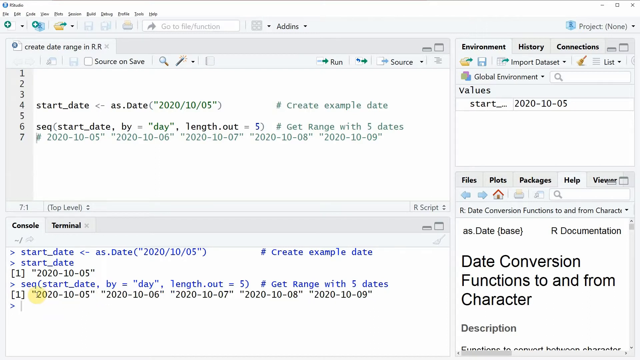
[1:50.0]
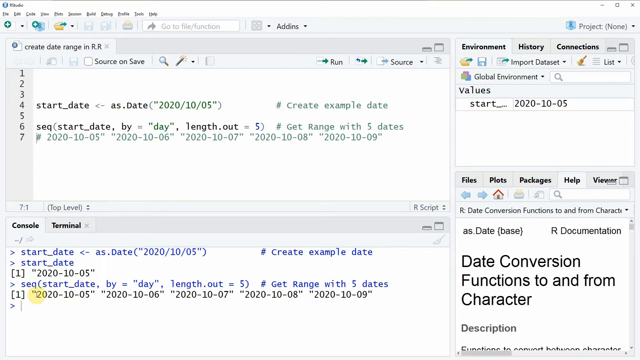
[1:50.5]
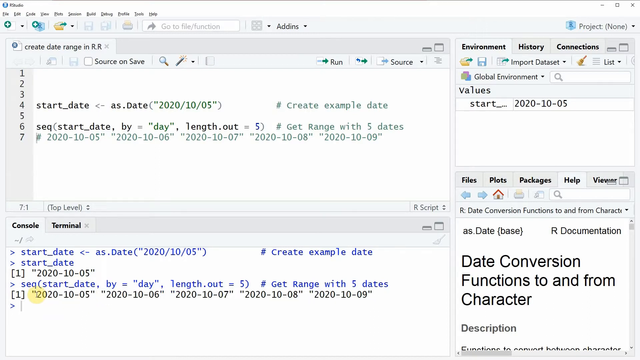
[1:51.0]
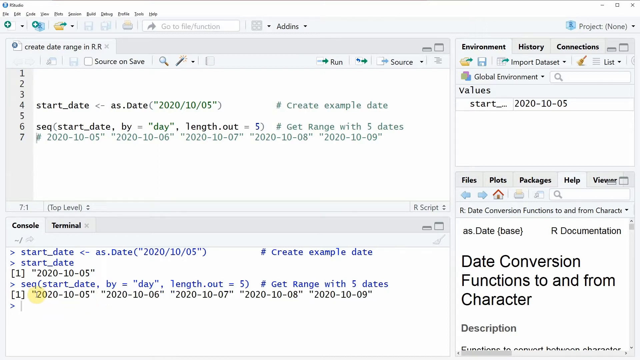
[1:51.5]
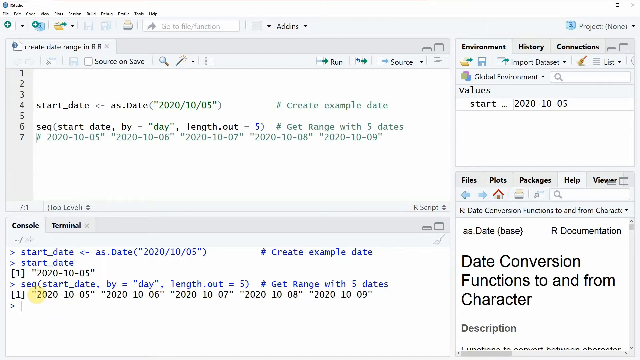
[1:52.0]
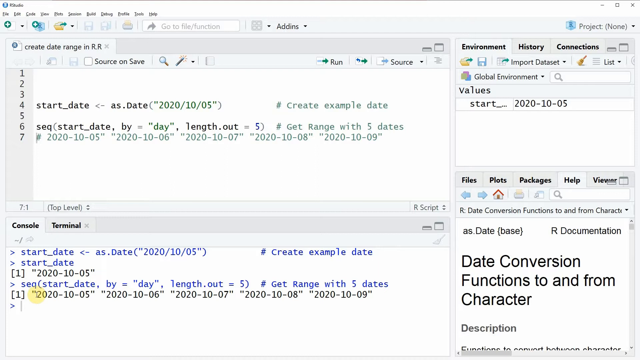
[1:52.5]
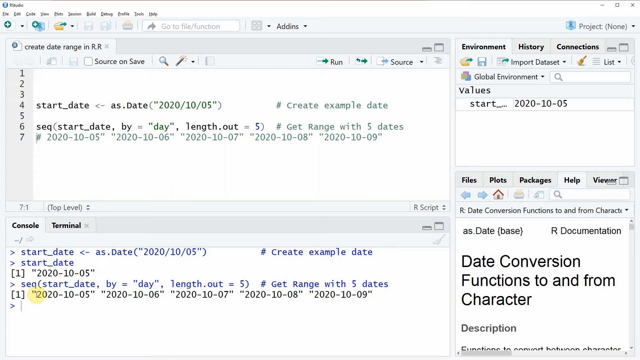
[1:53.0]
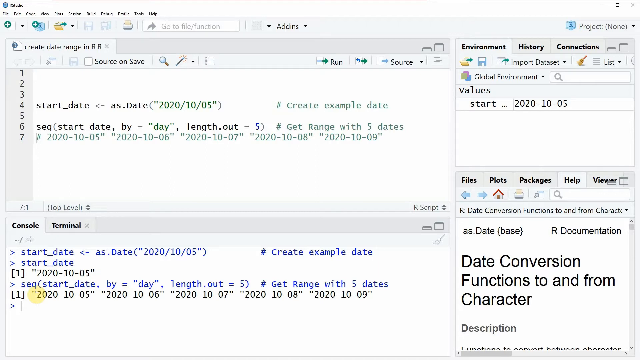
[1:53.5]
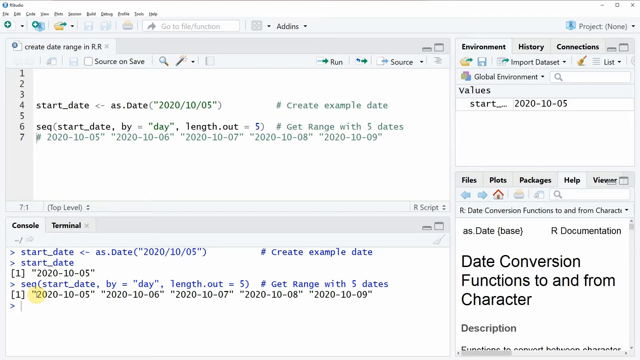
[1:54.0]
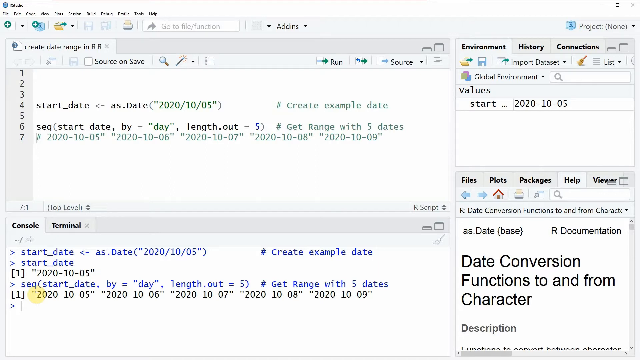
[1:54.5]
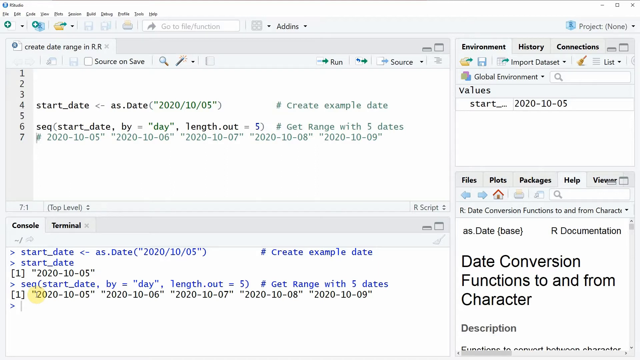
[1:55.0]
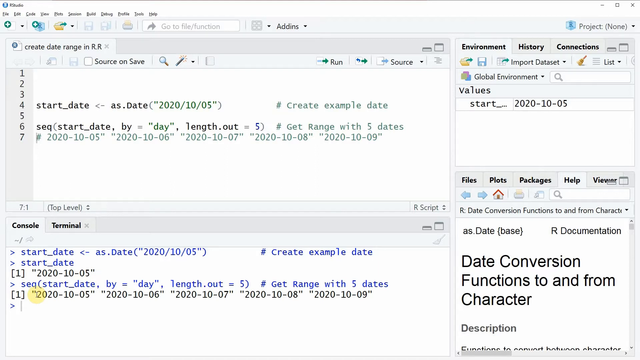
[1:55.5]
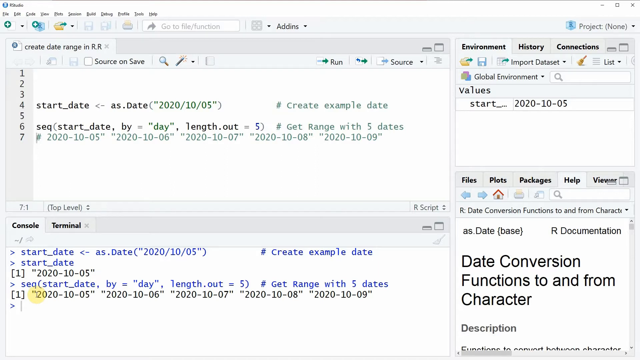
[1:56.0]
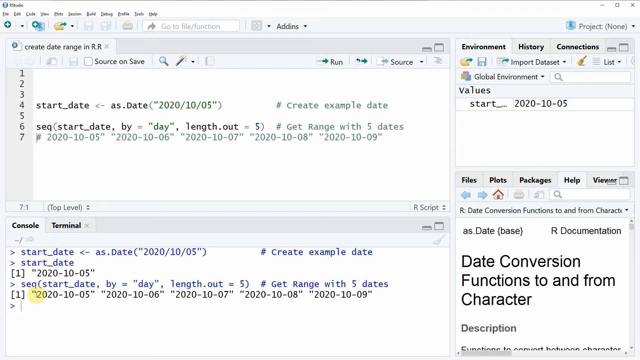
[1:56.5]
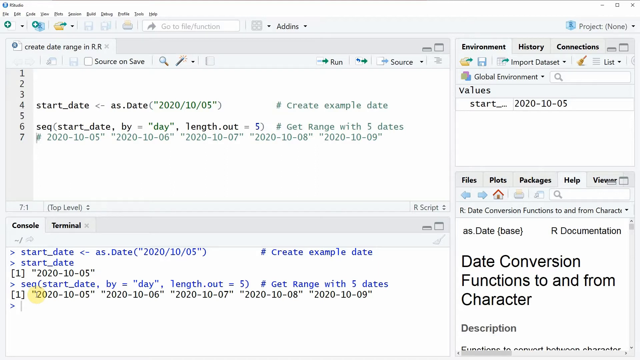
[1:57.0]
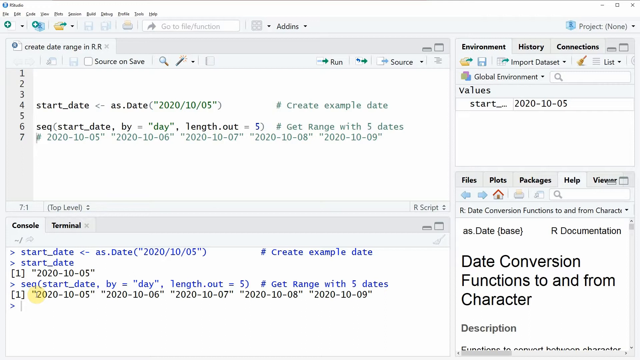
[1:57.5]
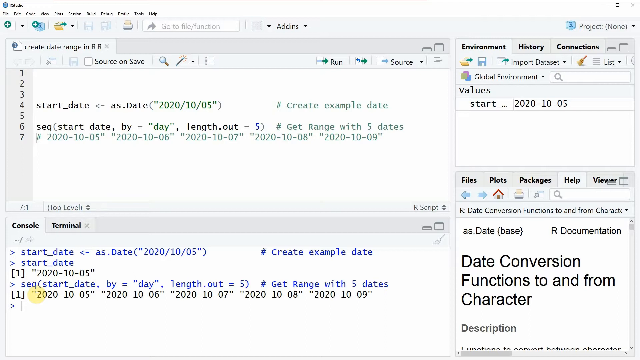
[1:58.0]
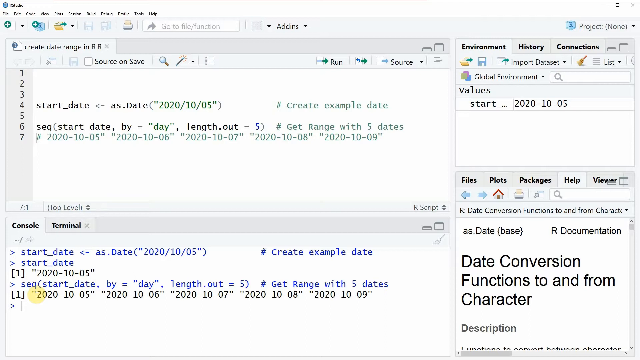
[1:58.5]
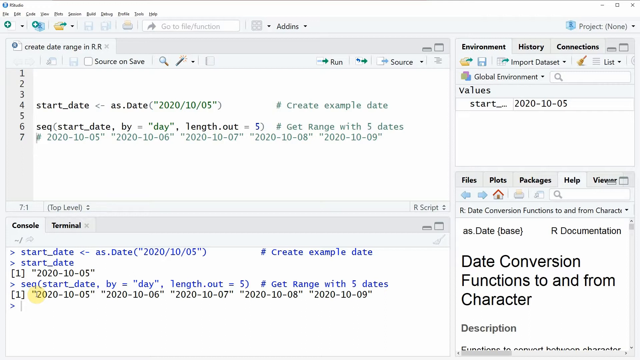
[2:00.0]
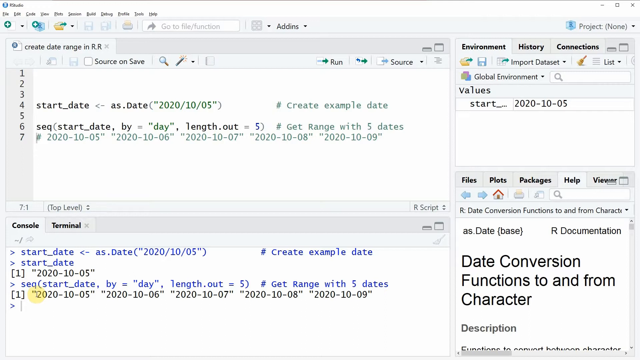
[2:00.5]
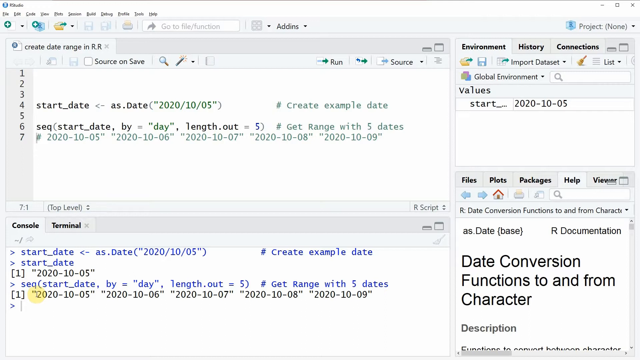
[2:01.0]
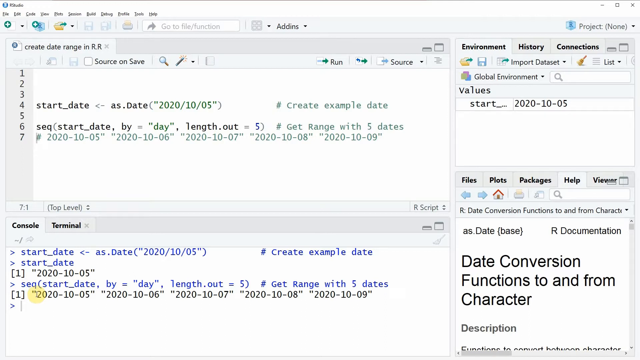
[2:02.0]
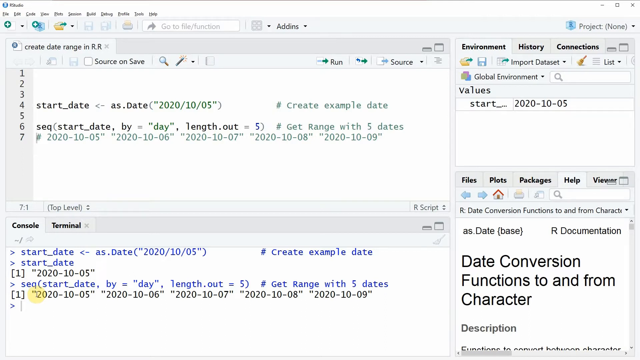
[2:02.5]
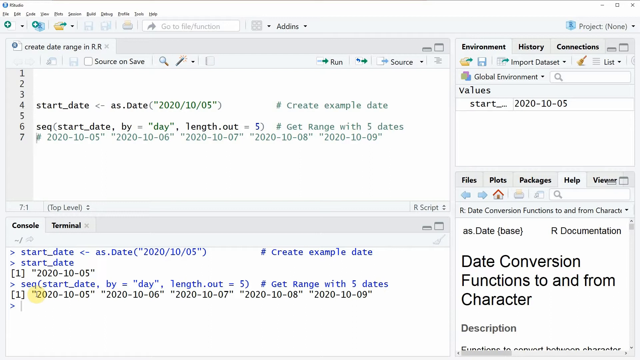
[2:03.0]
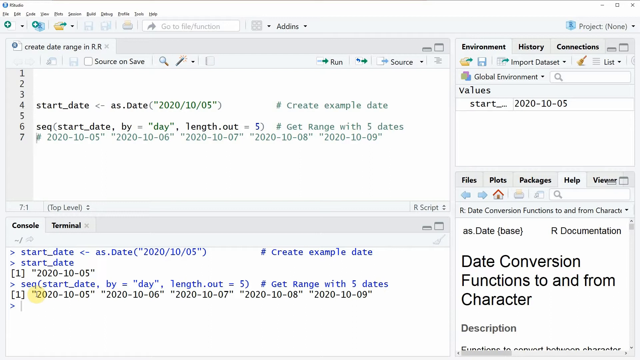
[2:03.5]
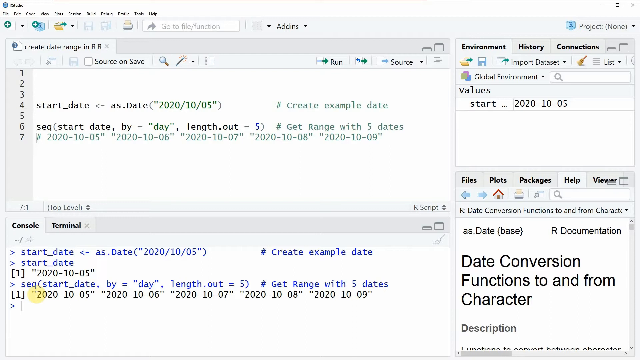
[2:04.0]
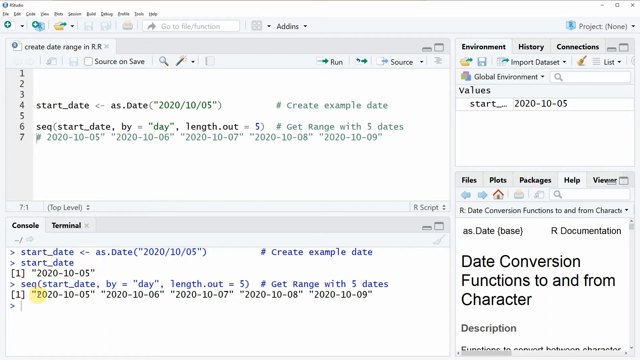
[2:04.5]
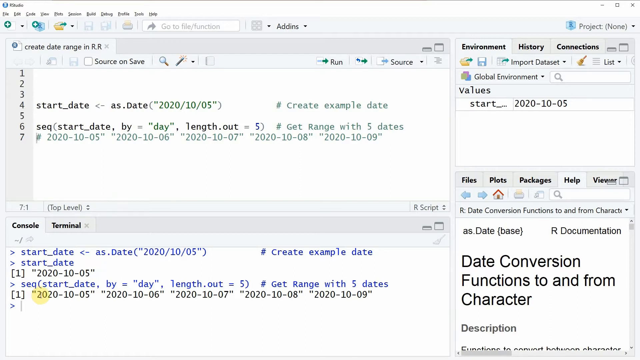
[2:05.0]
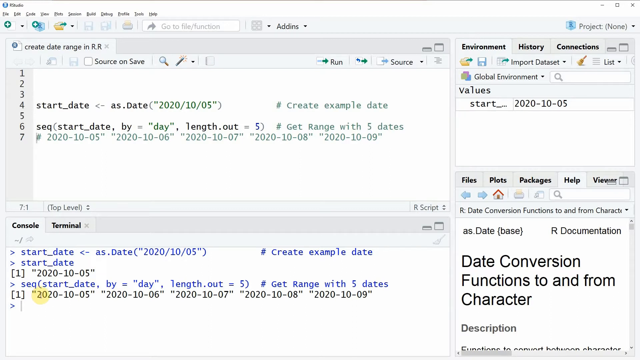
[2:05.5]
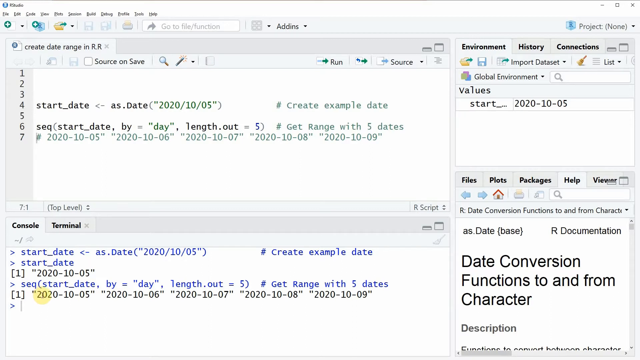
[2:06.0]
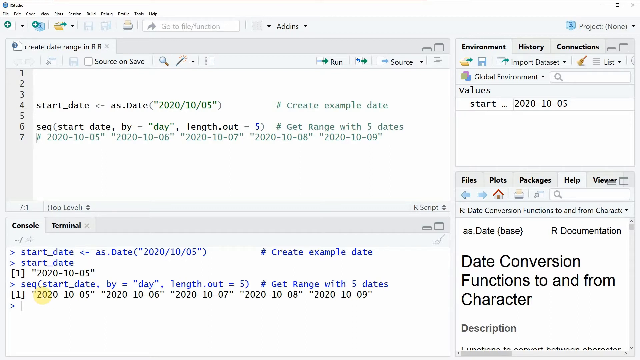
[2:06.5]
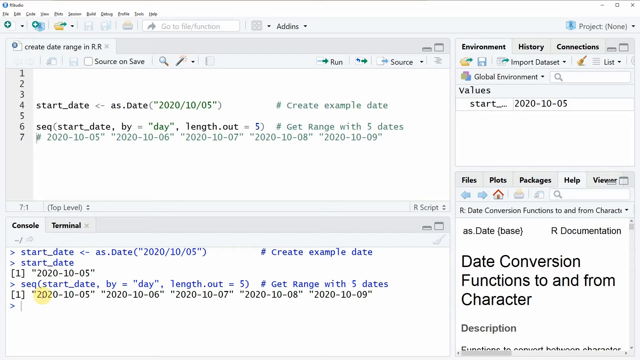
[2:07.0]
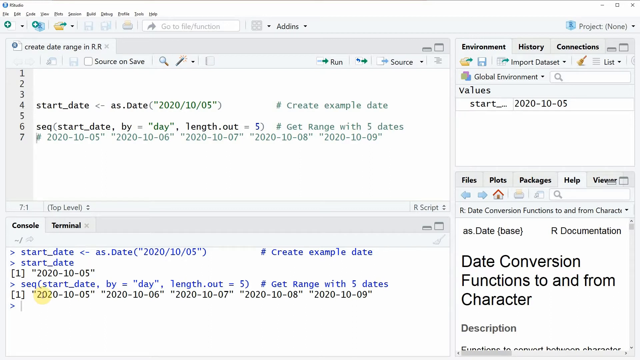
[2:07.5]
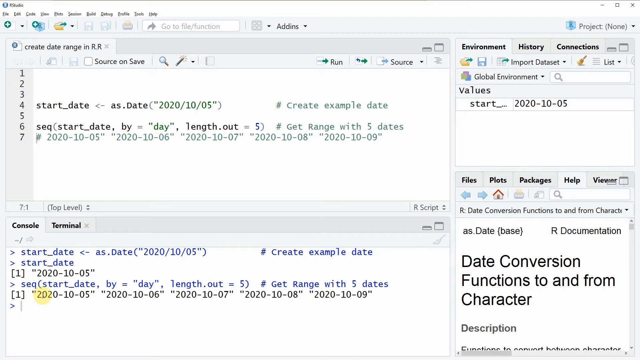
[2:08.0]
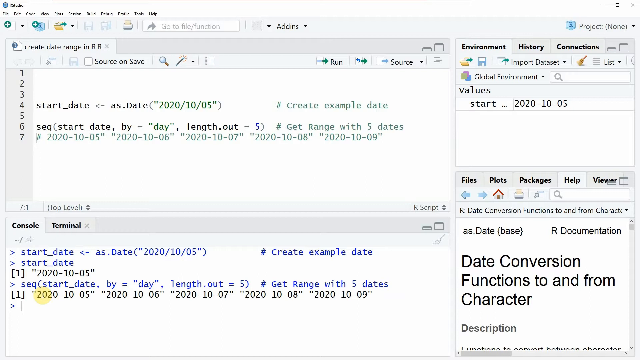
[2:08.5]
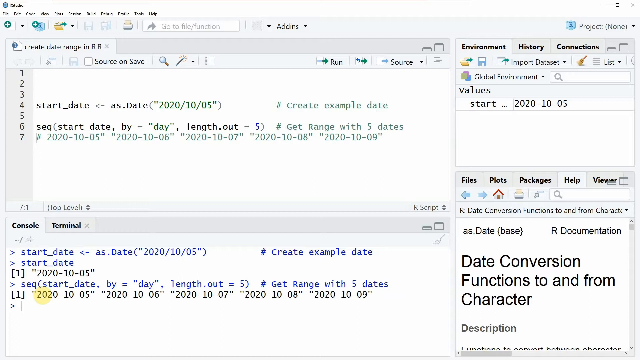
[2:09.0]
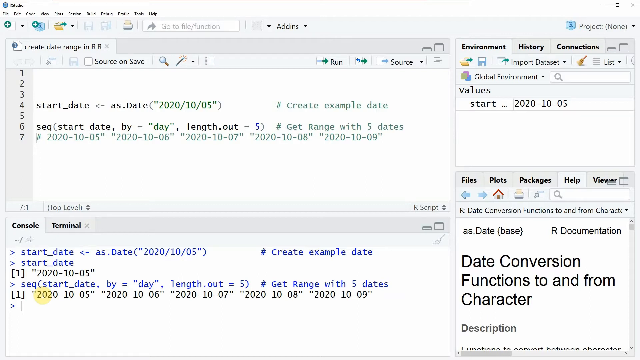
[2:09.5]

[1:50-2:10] The code contains quotes in arrays, along with hashtags and dates, and the dates are in quotation marks. The text is black and green on a white background.